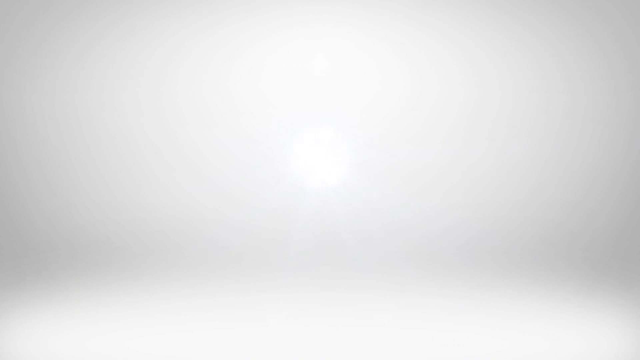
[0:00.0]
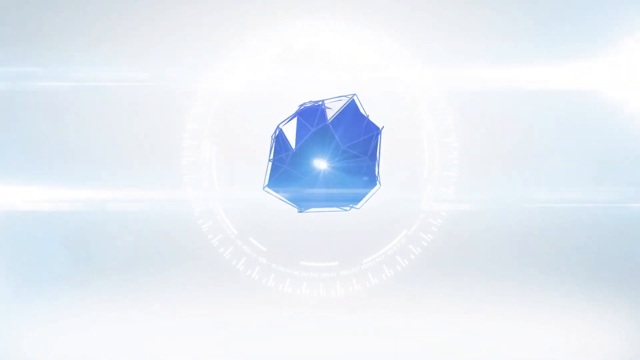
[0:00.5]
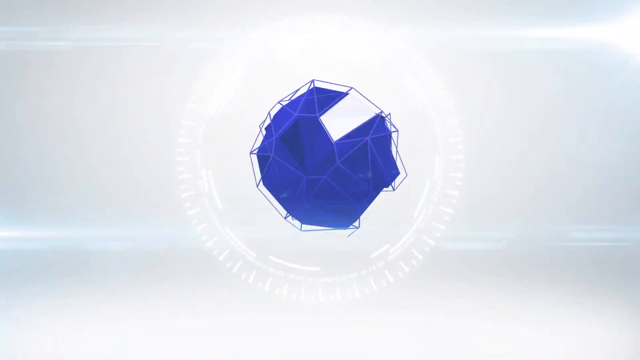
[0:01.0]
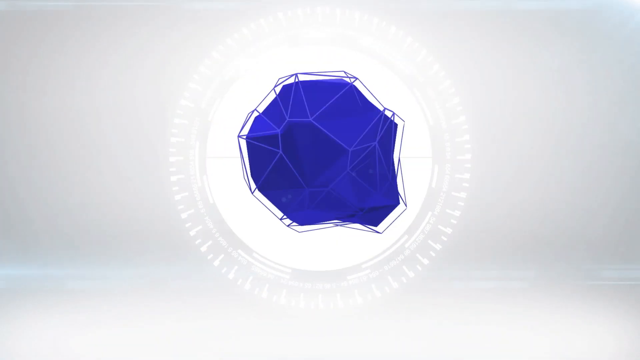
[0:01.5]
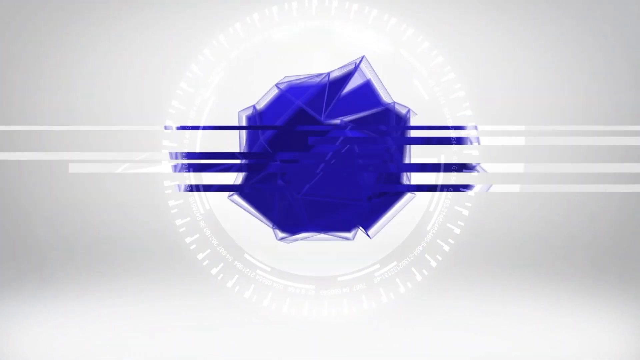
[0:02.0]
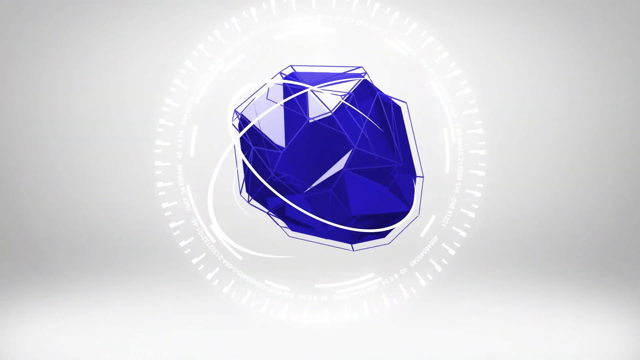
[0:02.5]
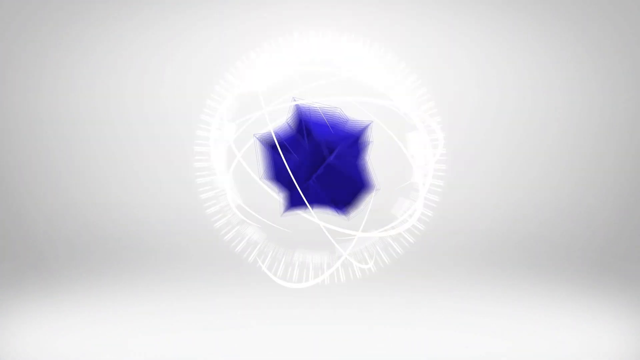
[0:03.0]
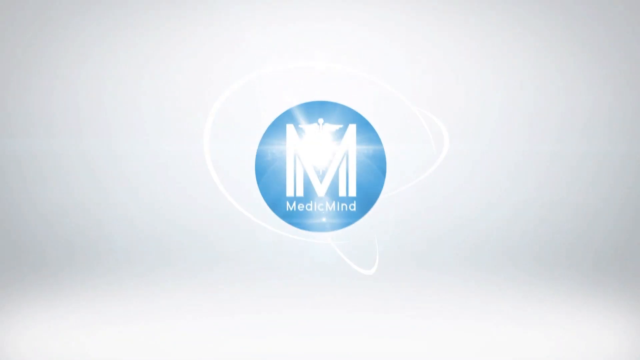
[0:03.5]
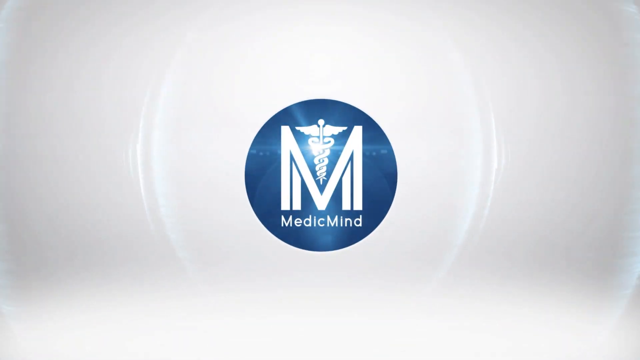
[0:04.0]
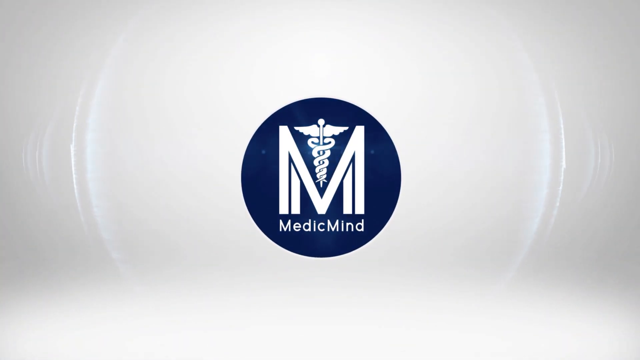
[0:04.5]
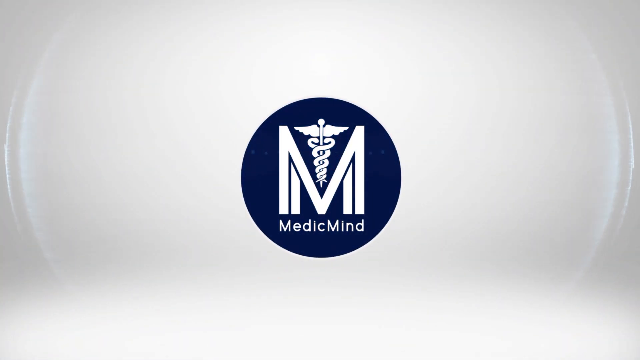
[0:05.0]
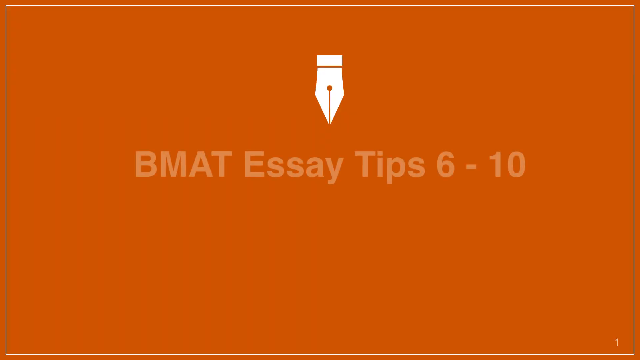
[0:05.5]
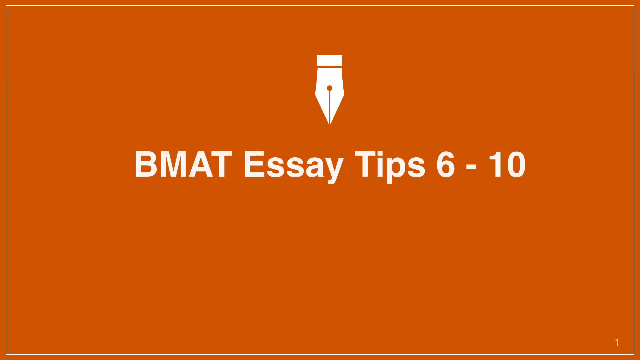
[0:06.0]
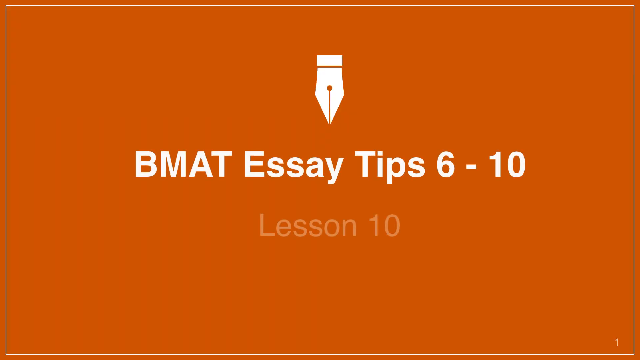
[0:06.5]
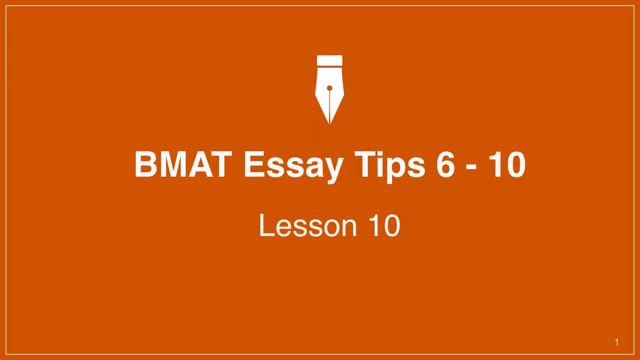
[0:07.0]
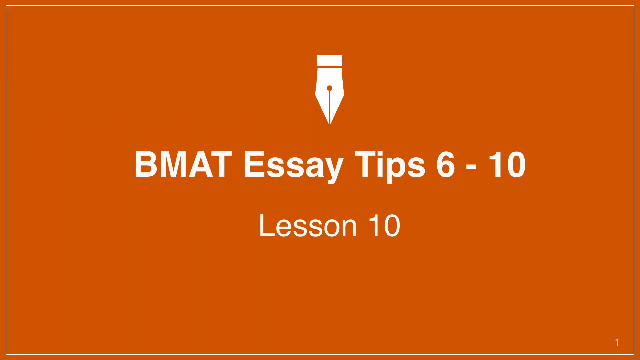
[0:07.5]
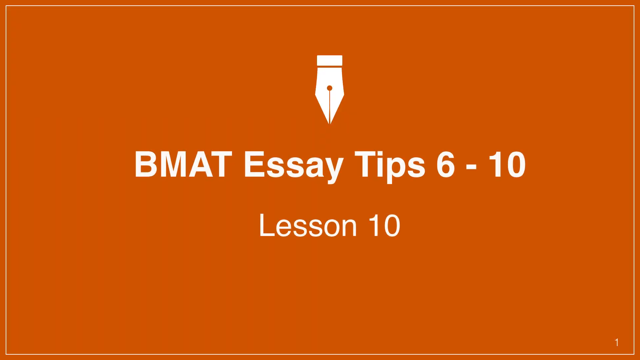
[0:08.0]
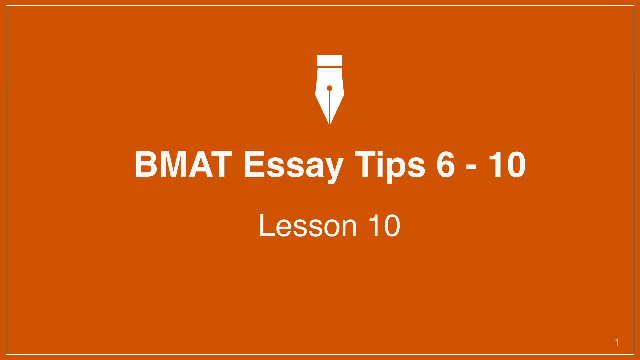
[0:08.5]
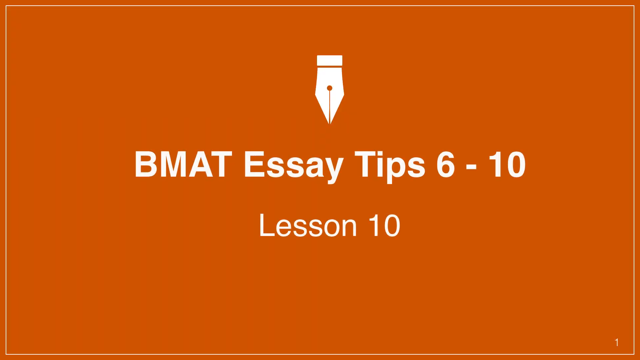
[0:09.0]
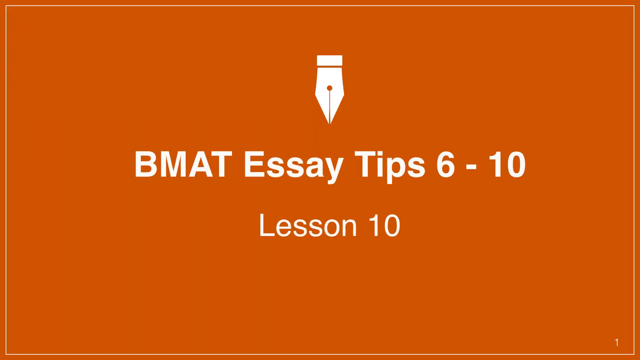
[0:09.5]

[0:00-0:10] The video opens on a white screen, which quickly transitions to a blue, floating object that moves and changes form. This gives way to a blue and white logo with white text reading "medic mind", featuring a large M and wings and a staff with something rotating around it. It then quickly transitions to an orange image with white text reading "BMAT essay tips 6 through 10" and a writing utensil logo. More white text emerges underneath, with smaller white text reading "lesson 10".